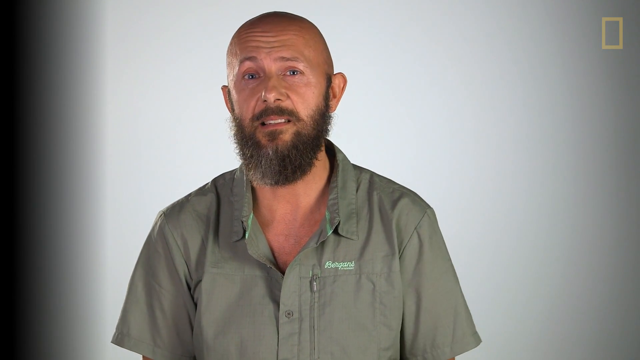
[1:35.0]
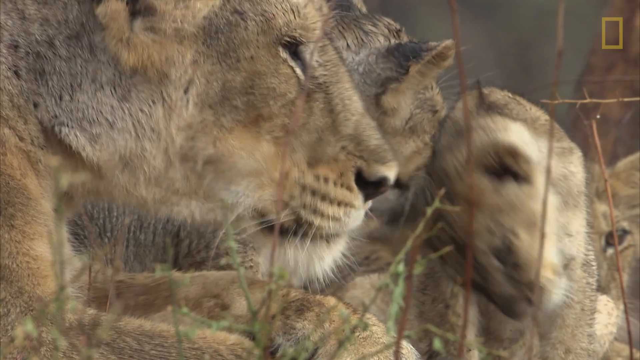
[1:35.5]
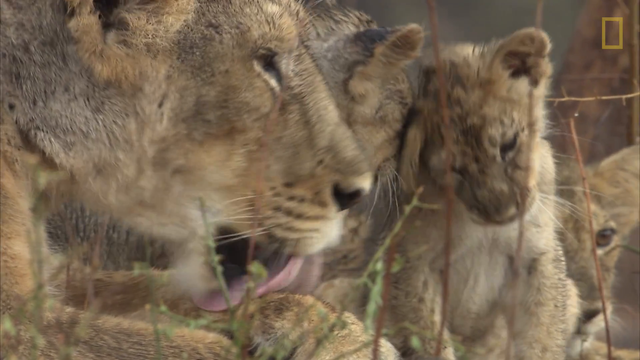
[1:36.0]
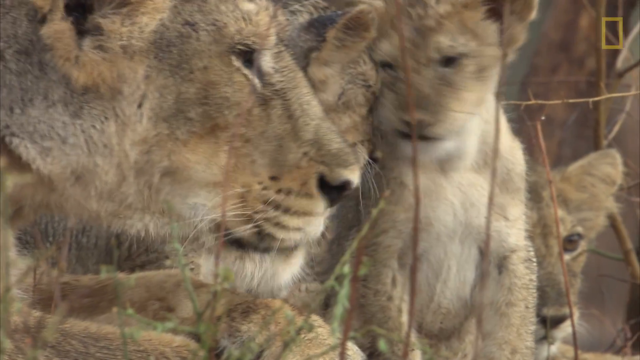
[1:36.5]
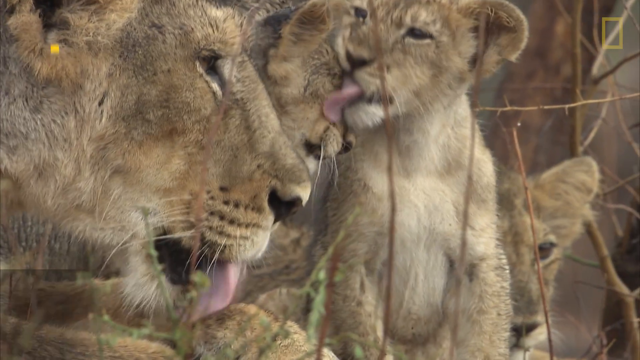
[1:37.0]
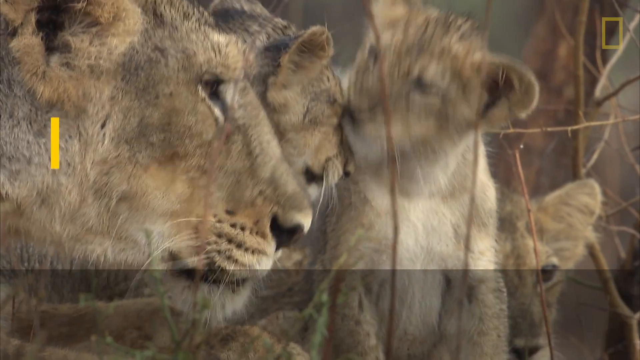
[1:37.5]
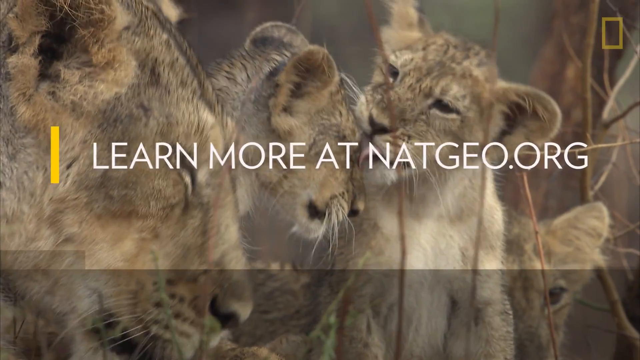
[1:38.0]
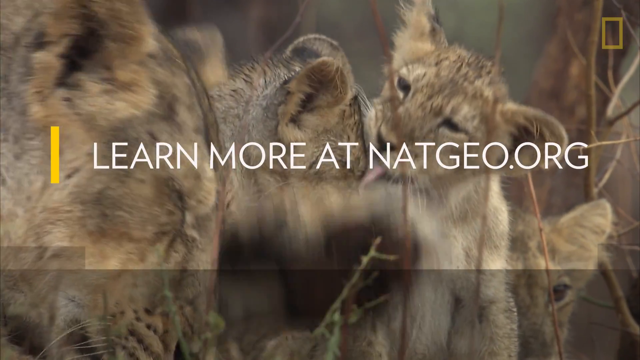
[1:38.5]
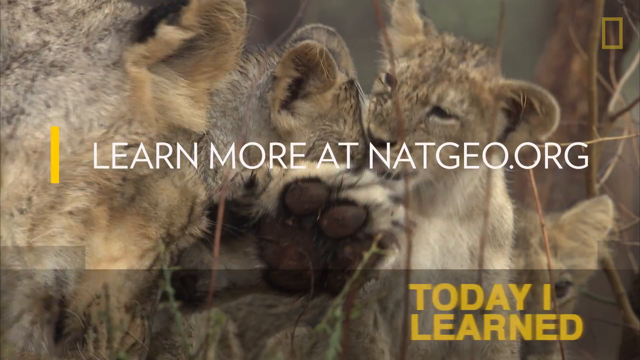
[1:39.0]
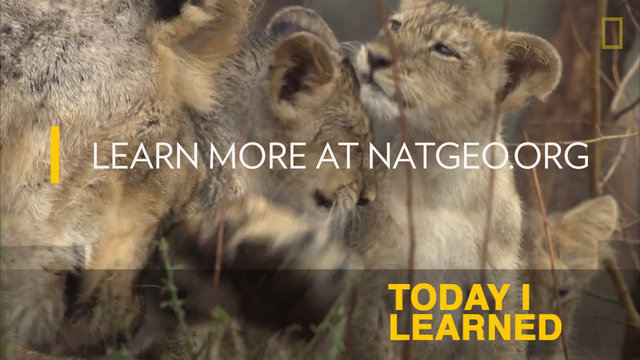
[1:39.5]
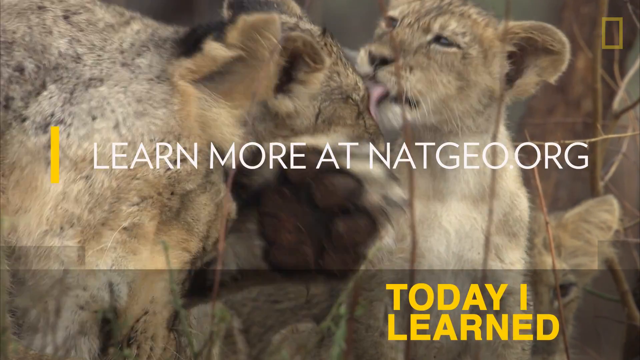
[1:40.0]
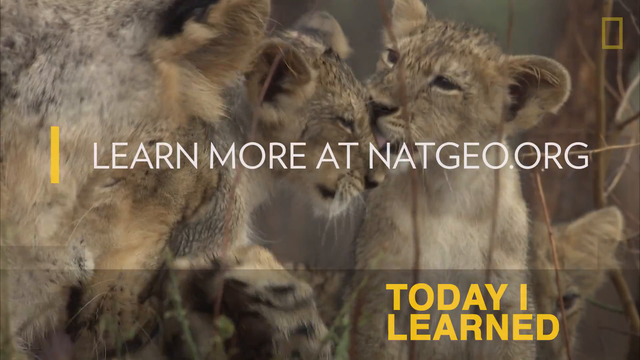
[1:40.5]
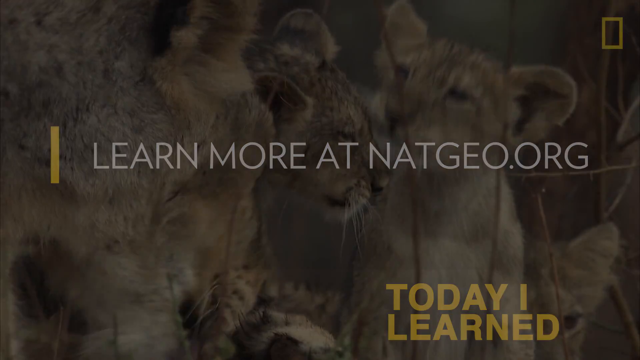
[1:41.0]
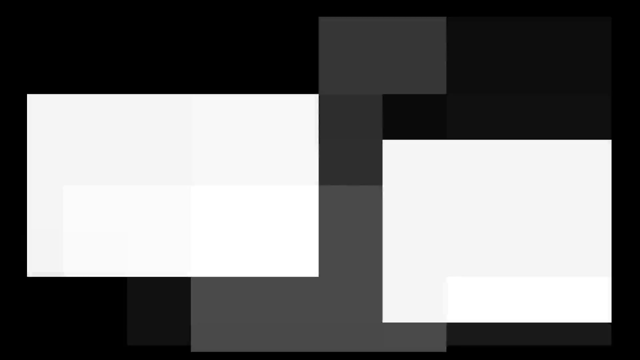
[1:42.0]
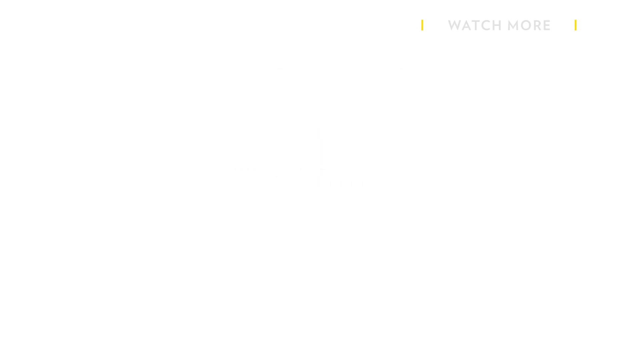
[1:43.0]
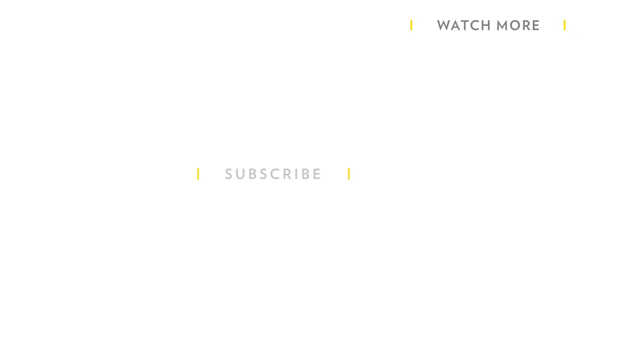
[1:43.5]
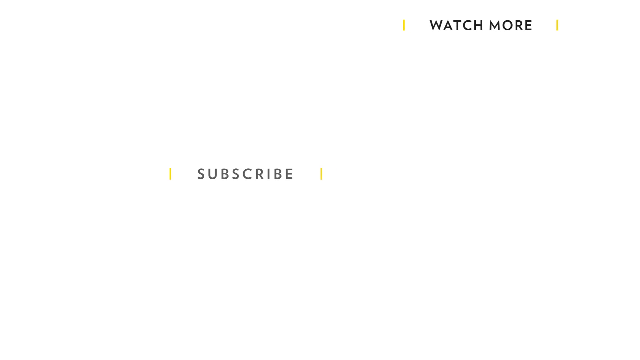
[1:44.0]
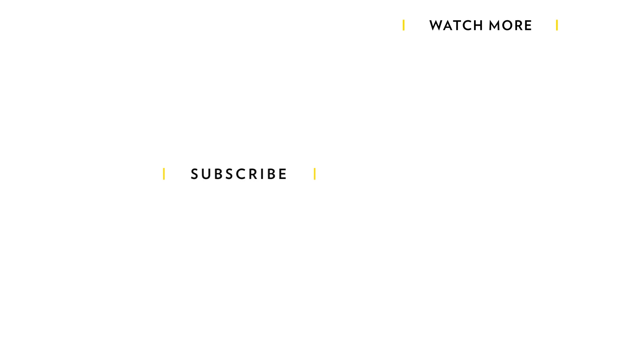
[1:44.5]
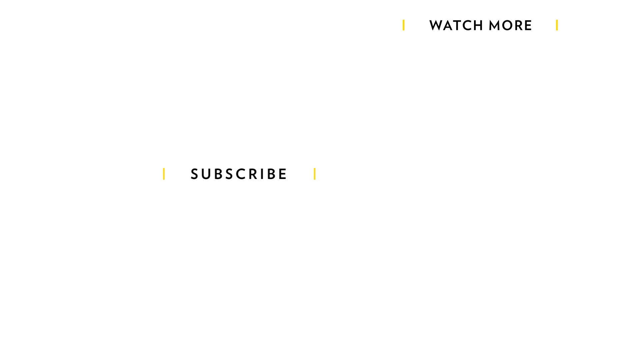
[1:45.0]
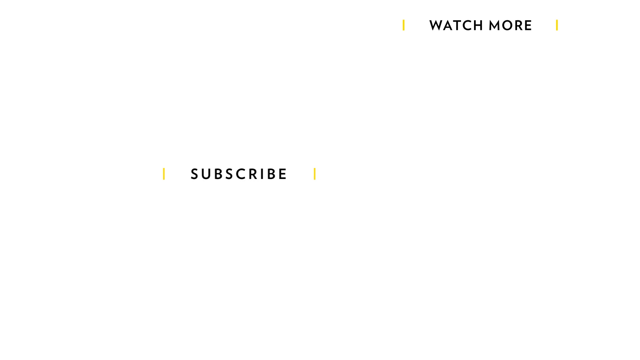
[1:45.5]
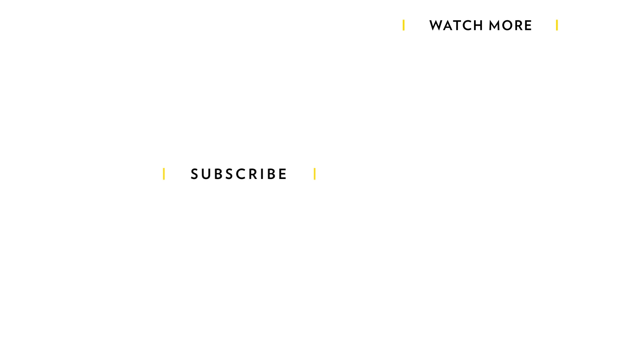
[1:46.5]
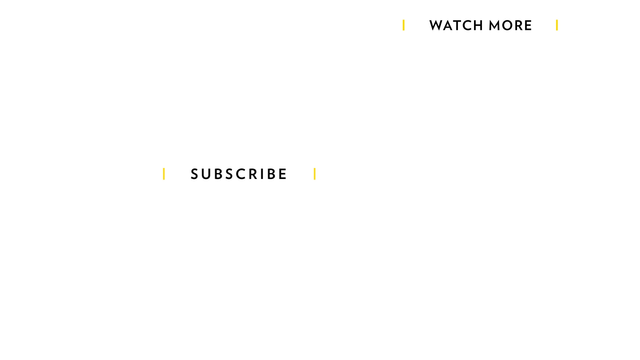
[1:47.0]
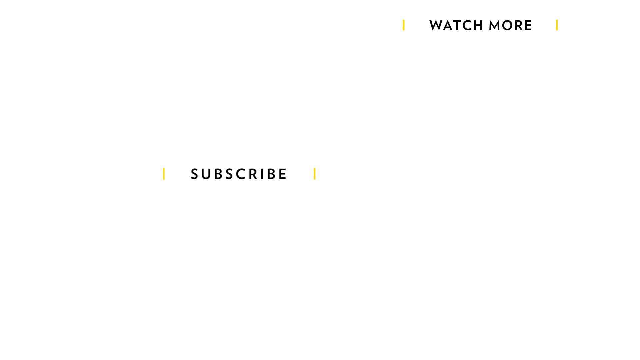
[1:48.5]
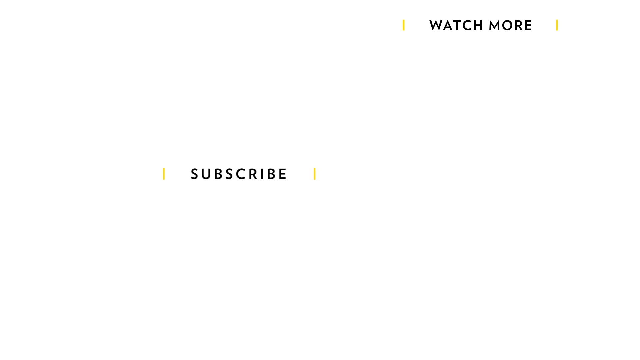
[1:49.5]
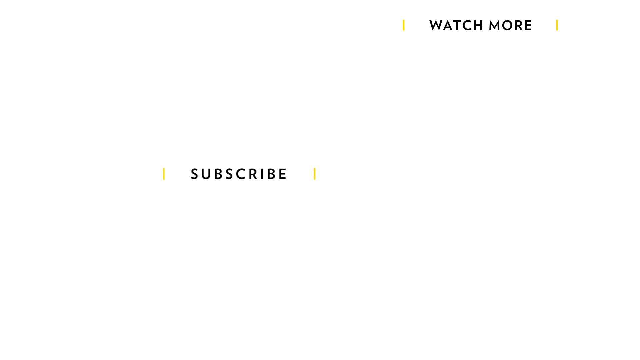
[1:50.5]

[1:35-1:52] The tail end of the conservation photographer talking is seen before a cut to little lion cubs kind of licking each other, in a close-up on their fuzzy faces. The video then fades to white, with text saying "learn more at nationalgeo.org" and "subscribe."